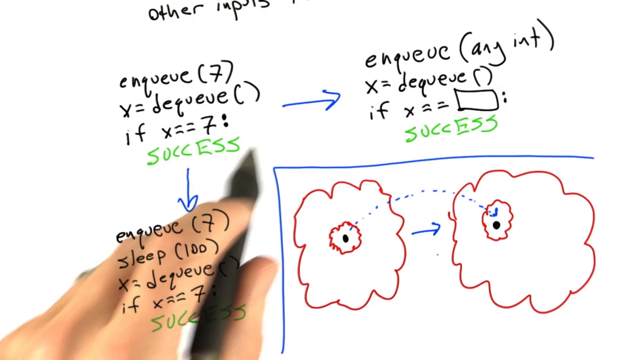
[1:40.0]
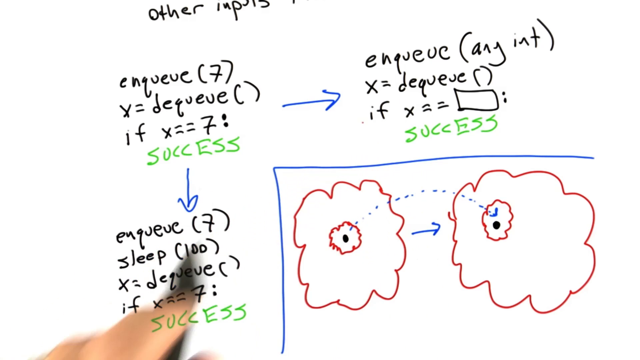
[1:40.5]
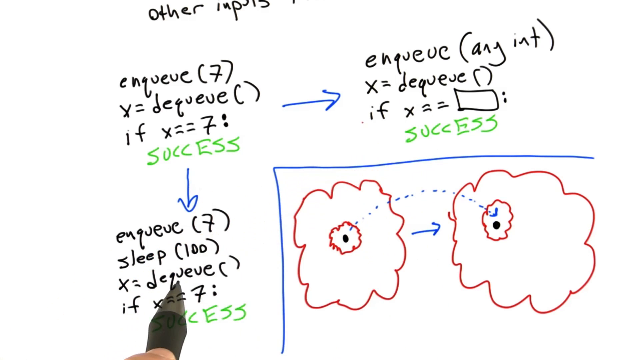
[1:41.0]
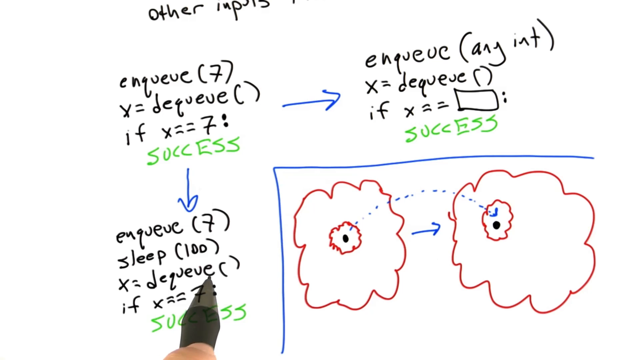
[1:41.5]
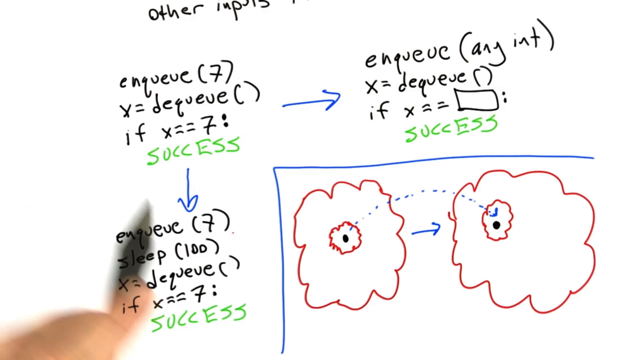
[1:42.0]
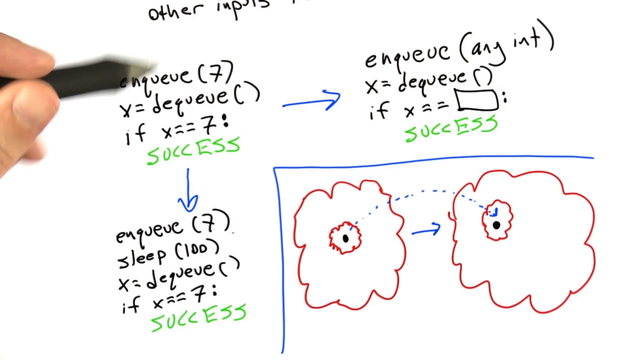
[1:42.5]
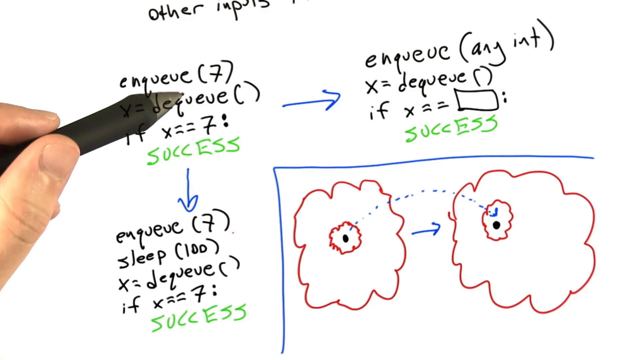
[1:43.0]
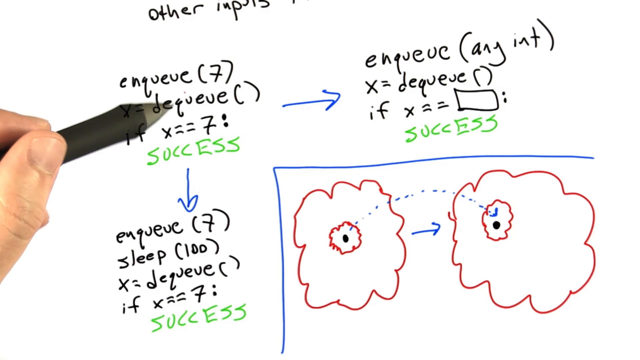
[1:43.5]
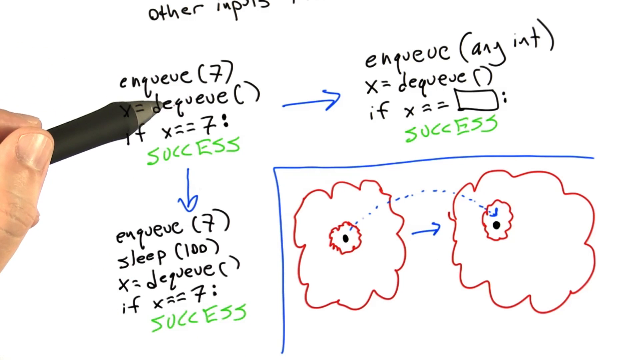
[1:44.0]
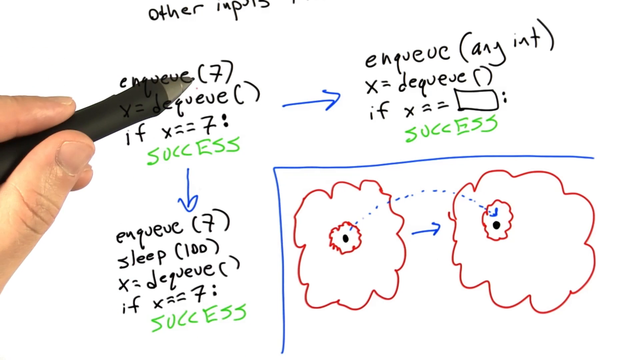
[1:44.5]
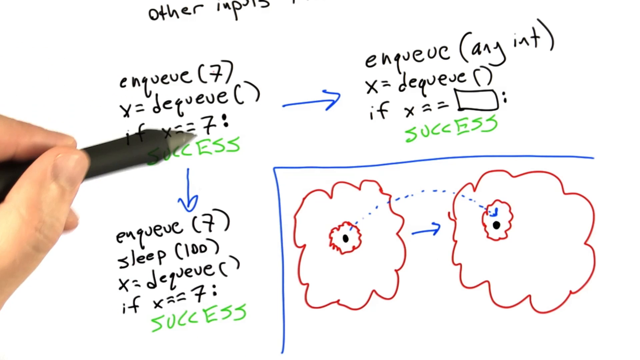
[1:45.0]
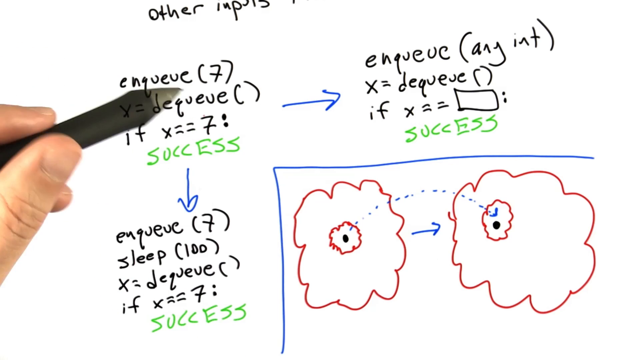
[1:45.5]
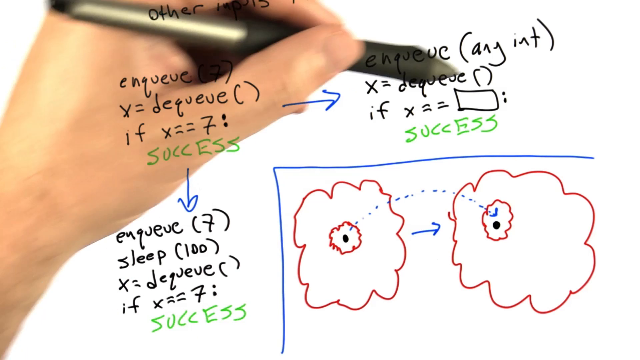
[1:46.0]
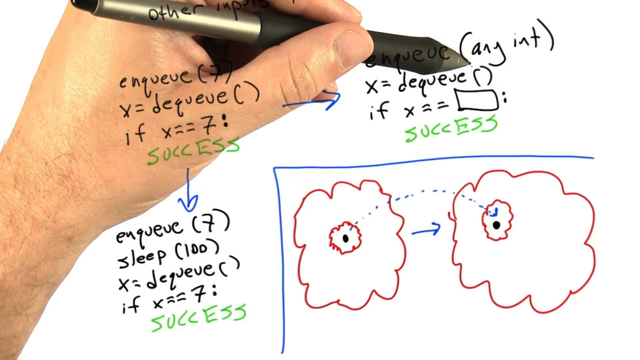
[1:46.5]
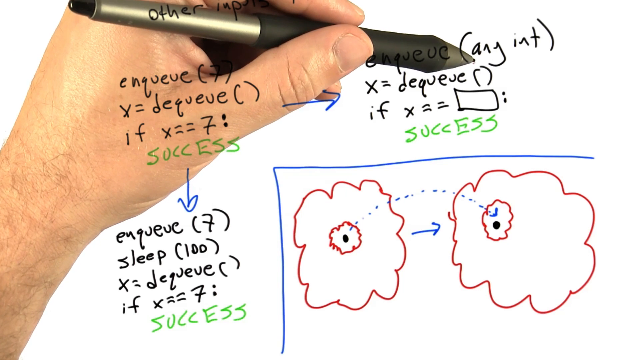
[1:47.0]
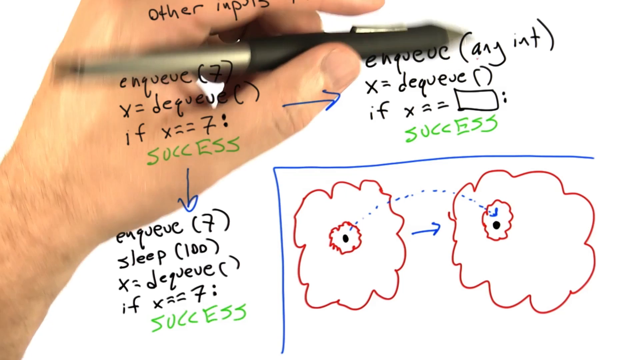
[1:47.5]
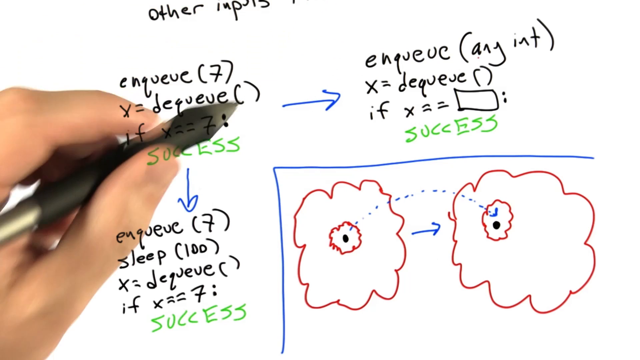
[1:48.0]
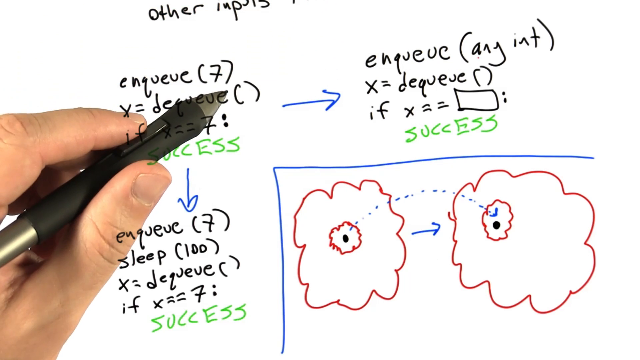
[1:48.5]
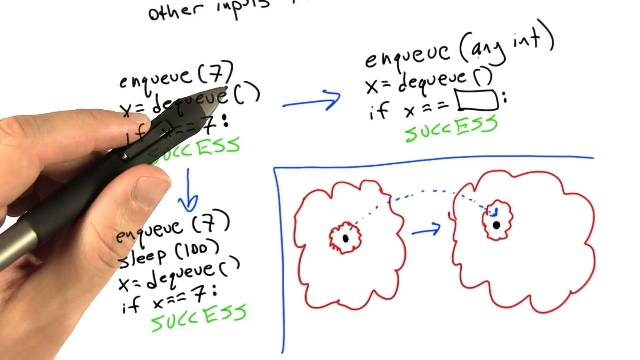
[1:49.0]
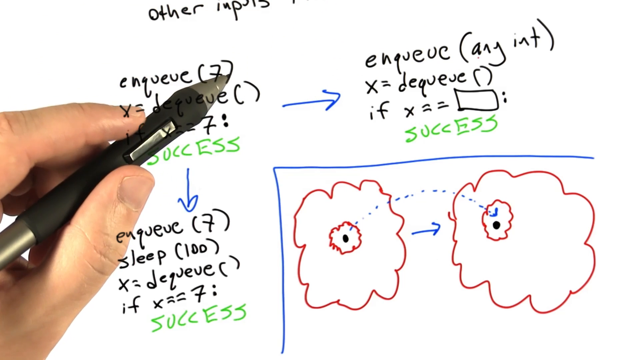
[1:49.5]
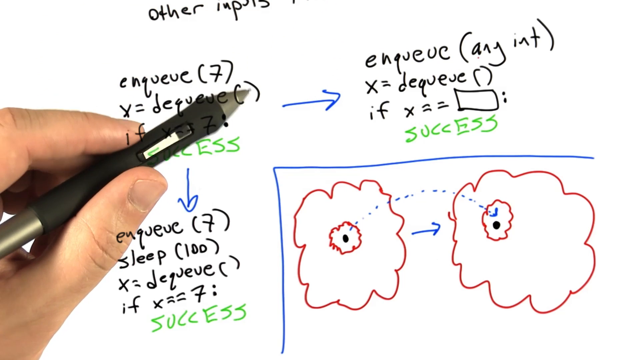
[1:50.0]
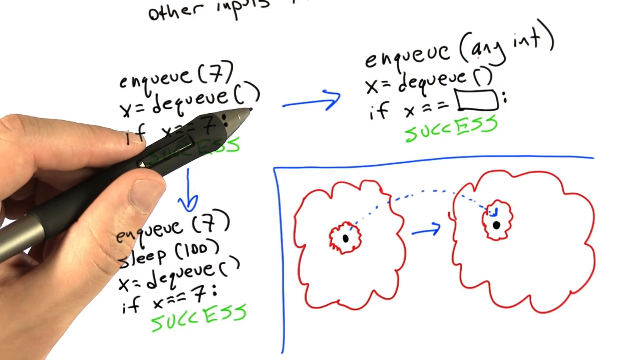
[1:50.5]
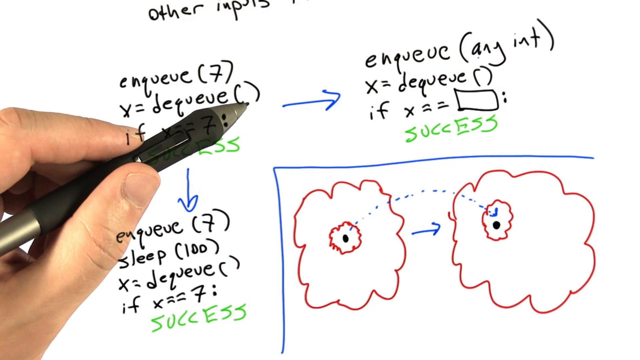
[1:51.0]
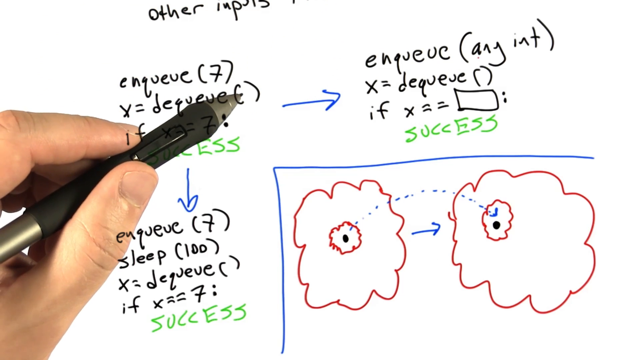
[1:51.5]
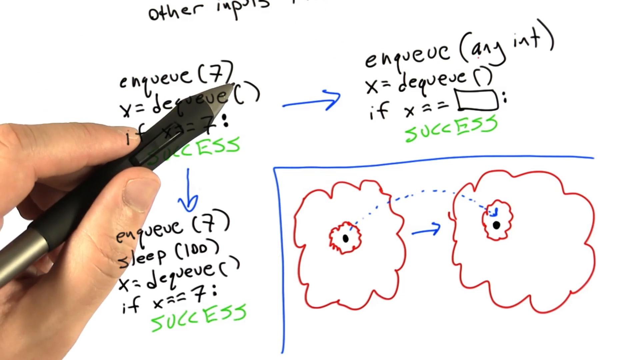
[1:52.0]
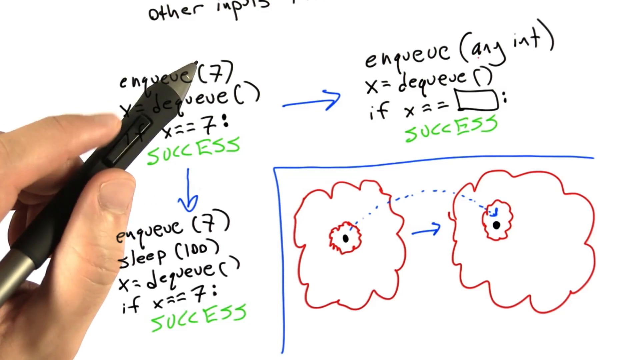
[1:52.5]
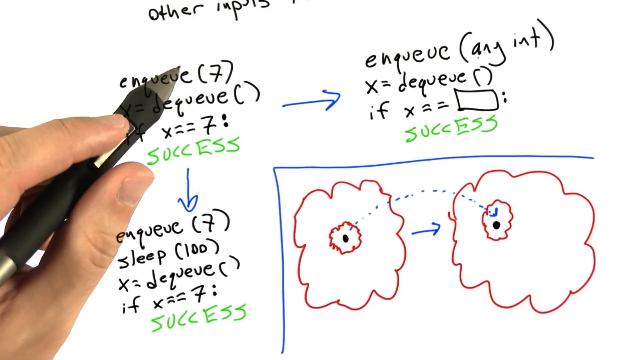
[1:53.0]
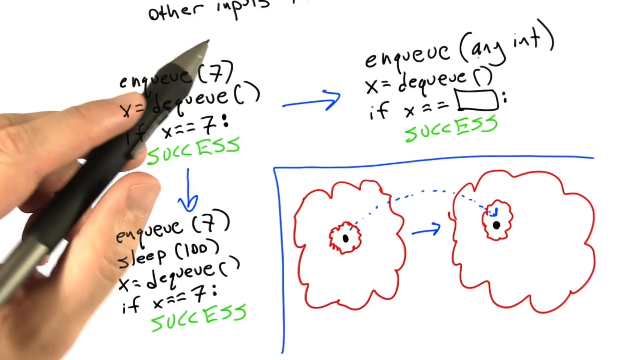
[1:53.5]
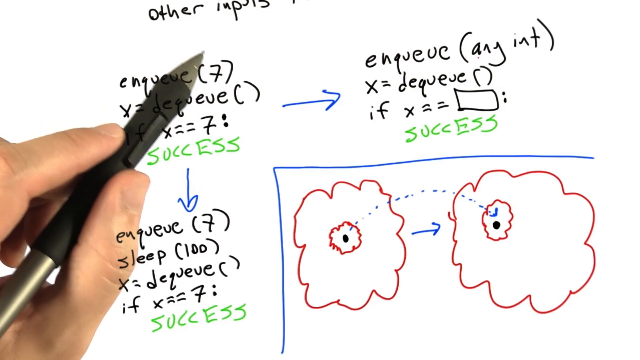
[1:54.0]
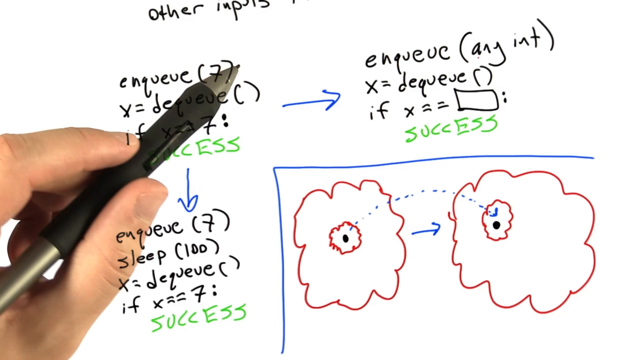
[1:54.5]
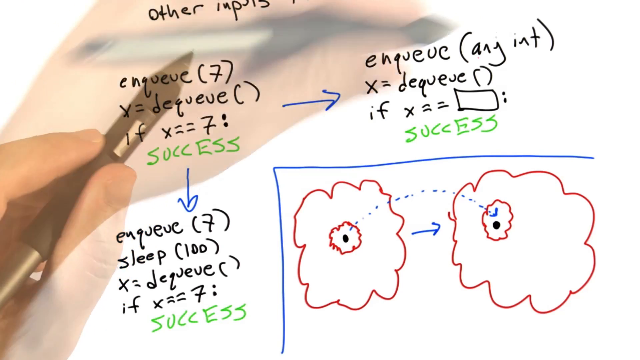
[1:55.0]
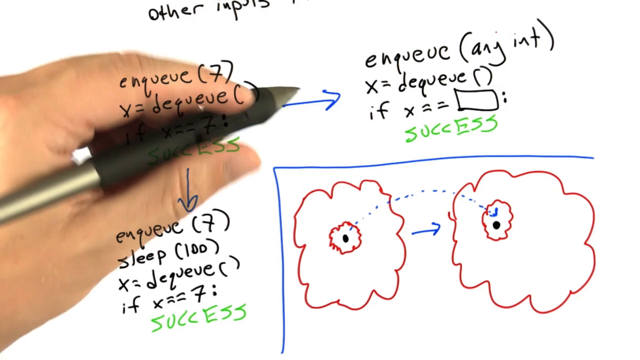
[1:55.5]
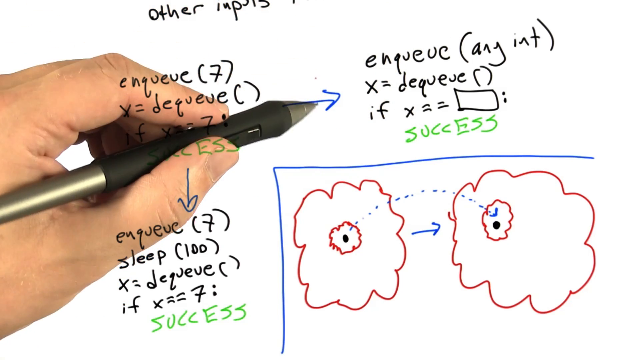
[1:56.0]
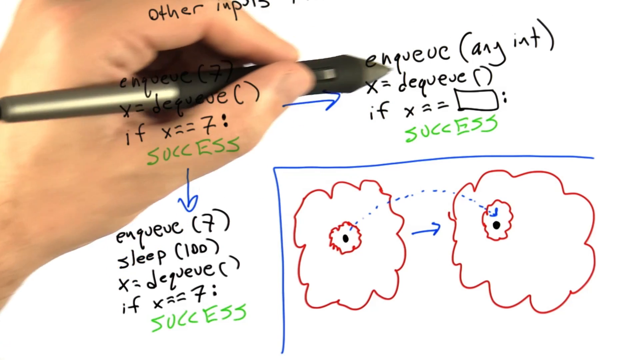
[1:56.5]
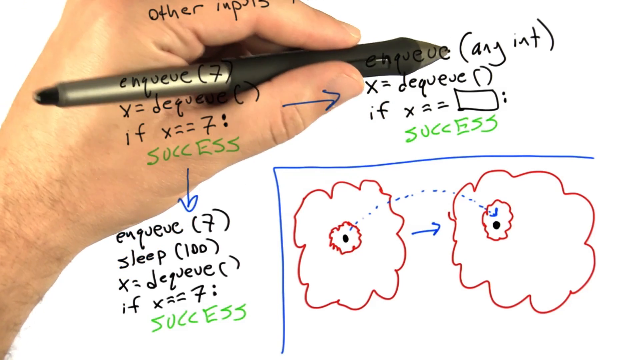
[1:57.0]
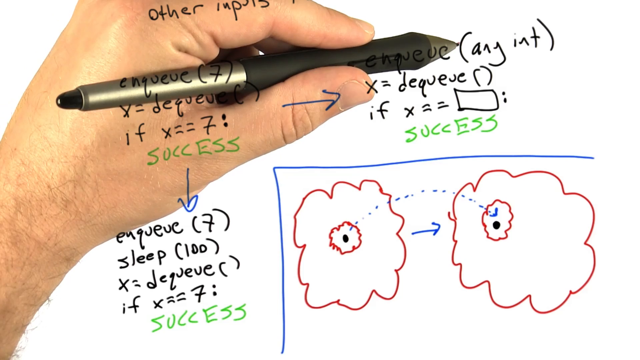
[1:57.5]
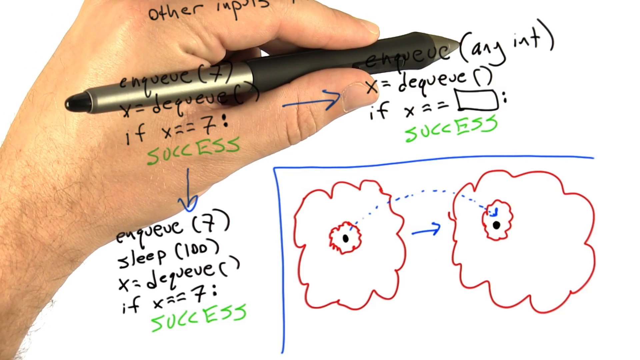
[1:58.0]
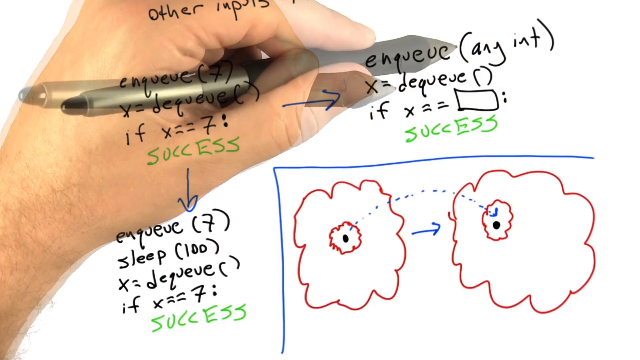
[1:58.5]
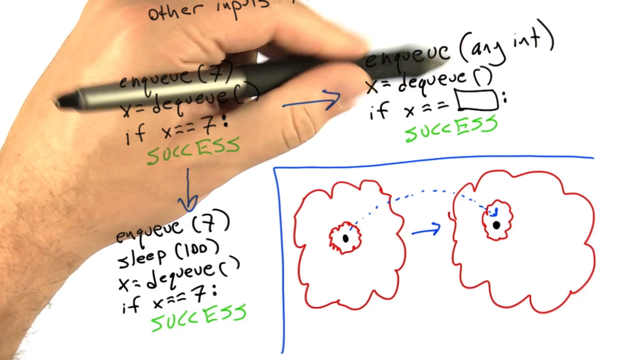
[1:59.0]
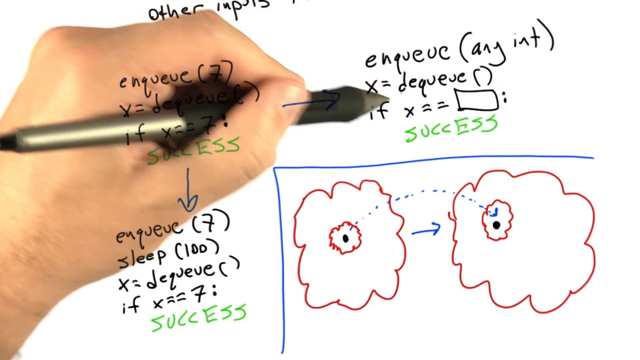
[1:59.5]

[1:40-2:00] The hand moves toward the equations, apparently explaining something, though what the equations are is unclear. It swiftly moves to the second equation at the top, then down to the bottom equation, pointing at something there, and swiftly back up to the first equation, where it goes to a character that looks like the number seven. The hand indicates the same character written a second time at the bottom of the same equation, where it reads "x equals equals 7". The hand swiftly hovers over to the second equation; it seems to be a man's hand. It swiftly moves back to the first equation and points out something that looks like a letter C. The hand then moves back to the second equation at the top and points out another phrase, which seems to be the word "int" (I-N-T), inside brackets. The pen continues to hover over the second equation.